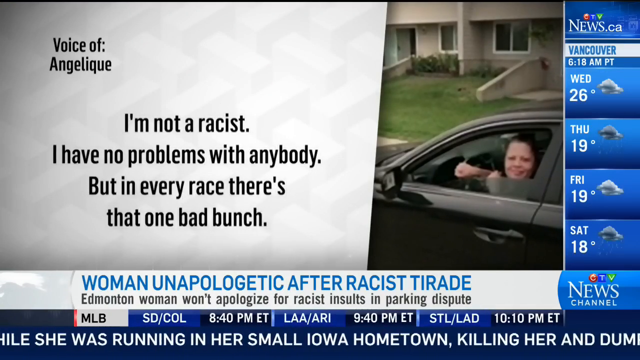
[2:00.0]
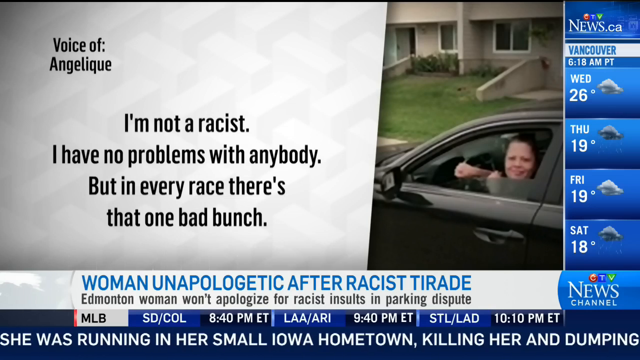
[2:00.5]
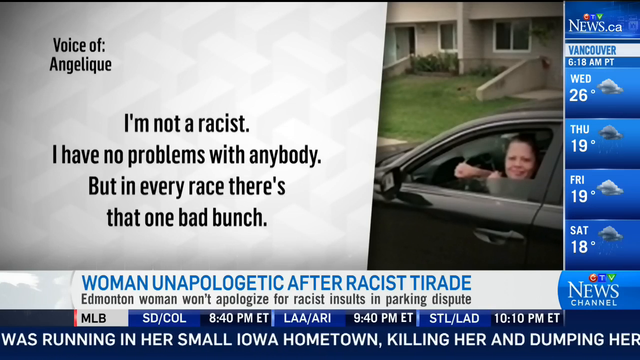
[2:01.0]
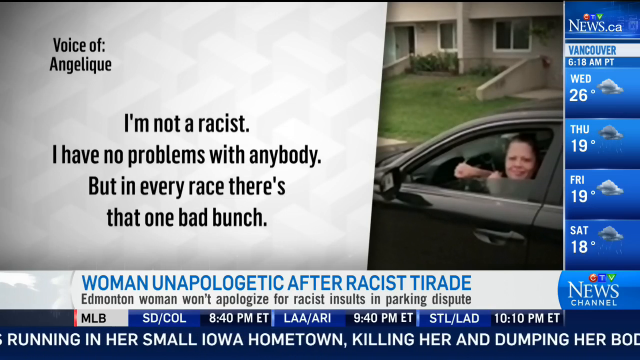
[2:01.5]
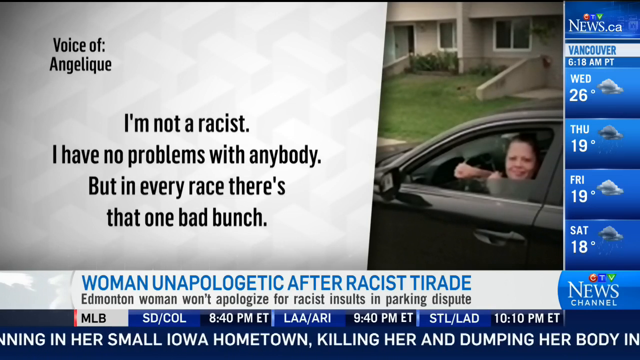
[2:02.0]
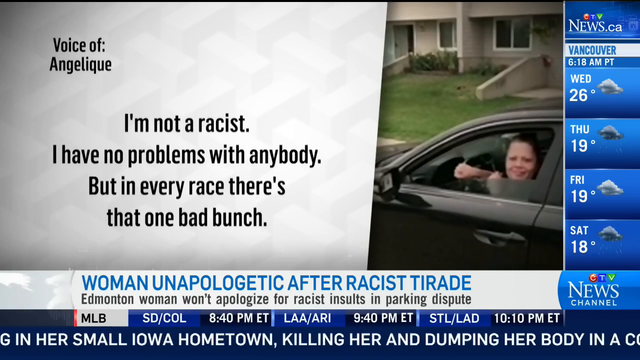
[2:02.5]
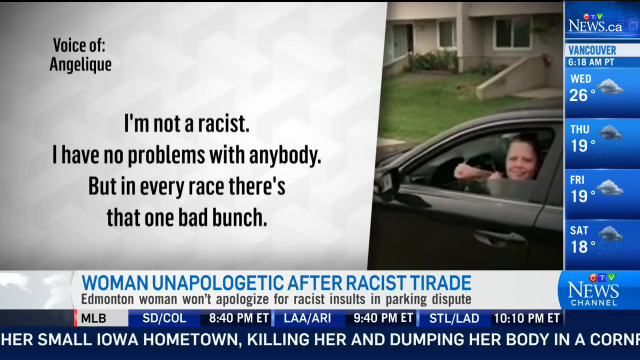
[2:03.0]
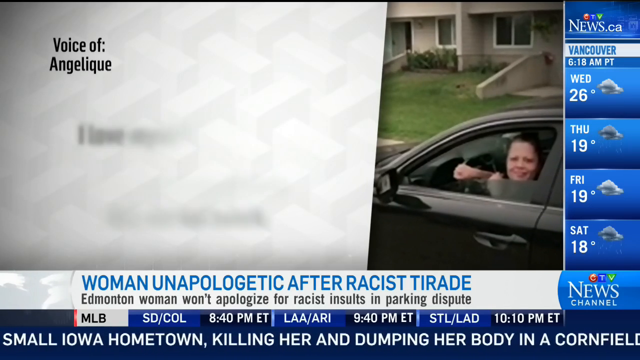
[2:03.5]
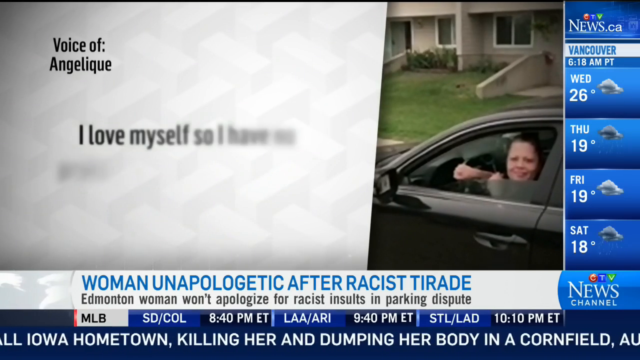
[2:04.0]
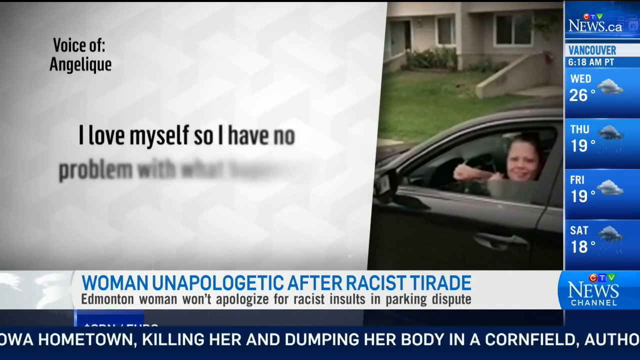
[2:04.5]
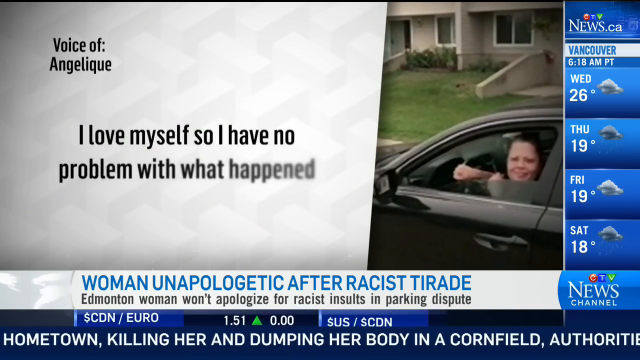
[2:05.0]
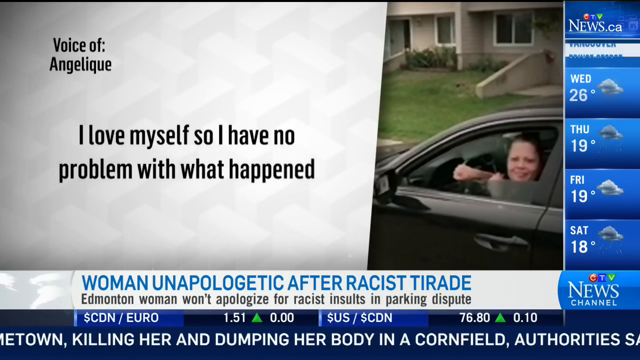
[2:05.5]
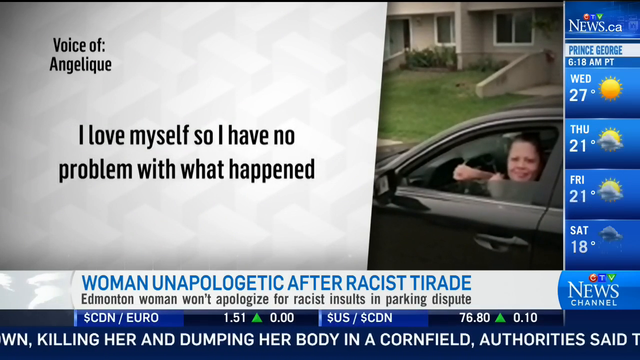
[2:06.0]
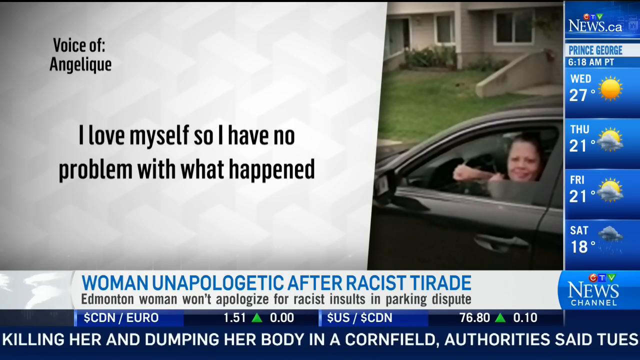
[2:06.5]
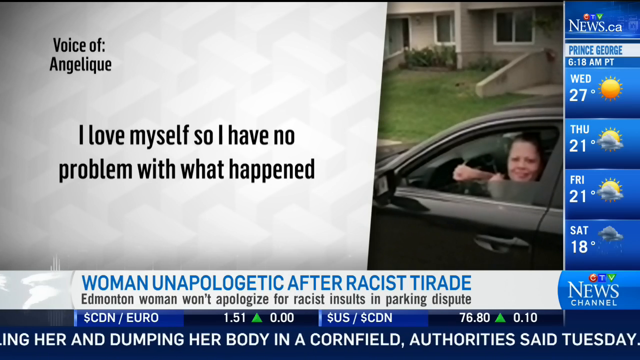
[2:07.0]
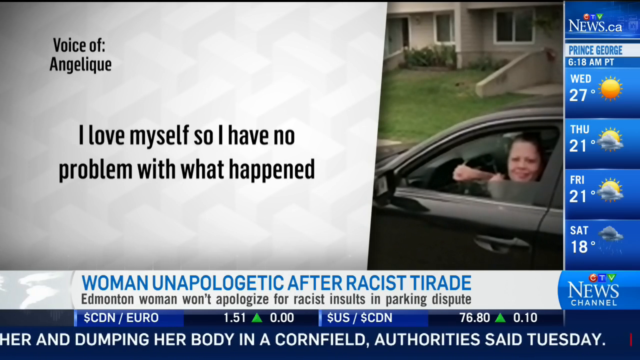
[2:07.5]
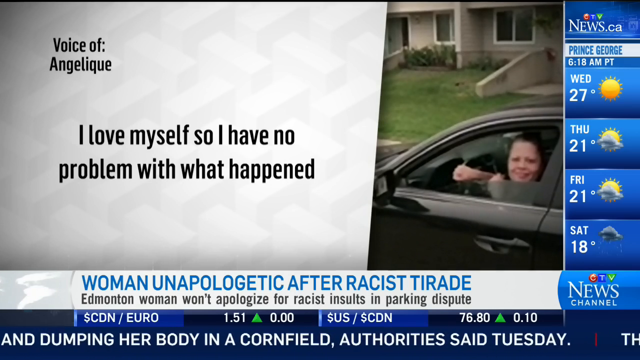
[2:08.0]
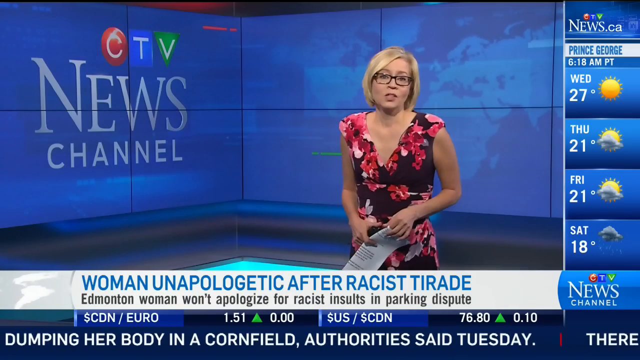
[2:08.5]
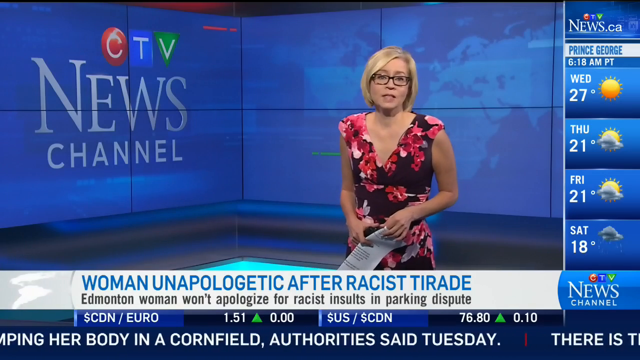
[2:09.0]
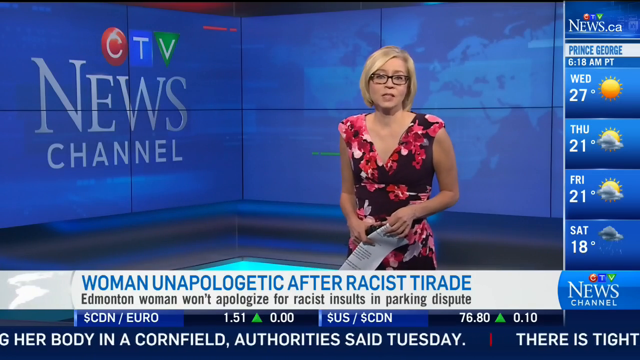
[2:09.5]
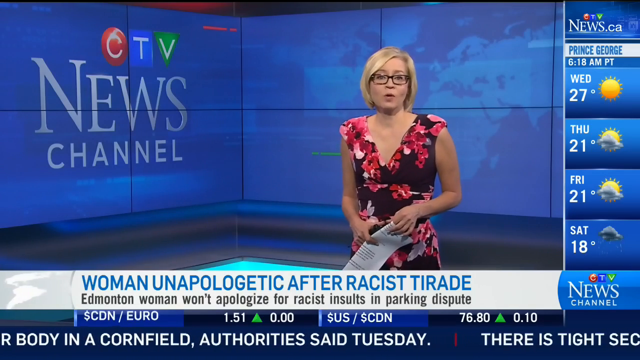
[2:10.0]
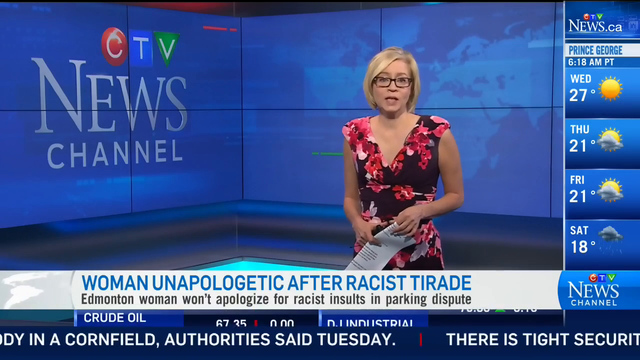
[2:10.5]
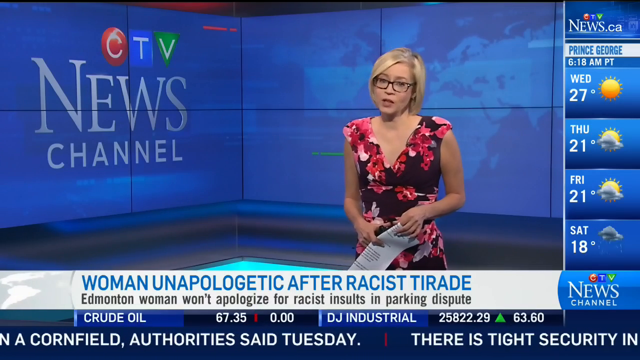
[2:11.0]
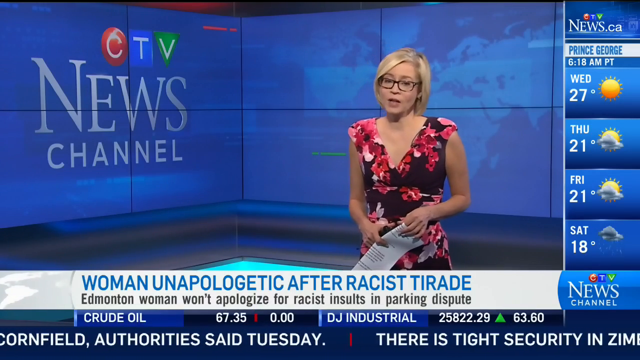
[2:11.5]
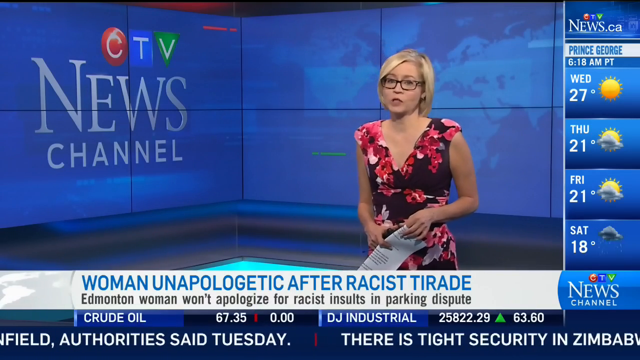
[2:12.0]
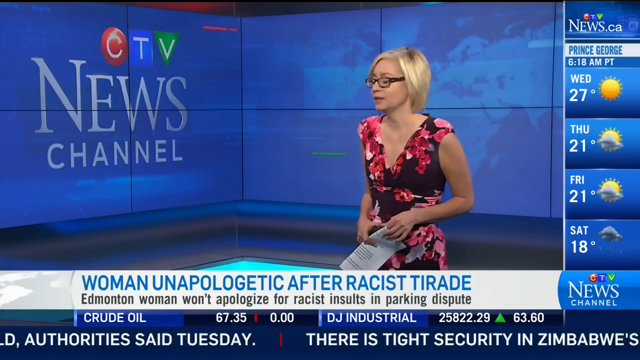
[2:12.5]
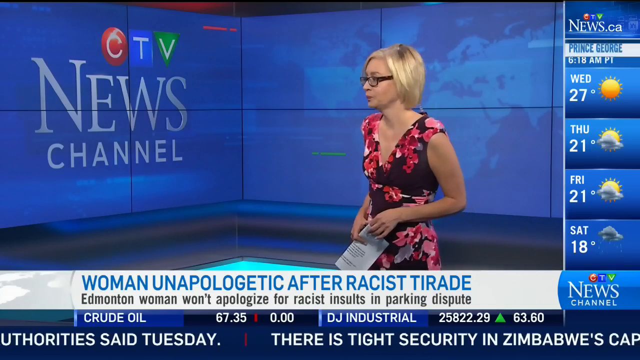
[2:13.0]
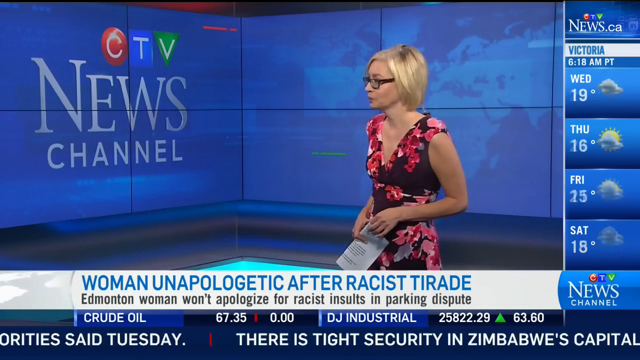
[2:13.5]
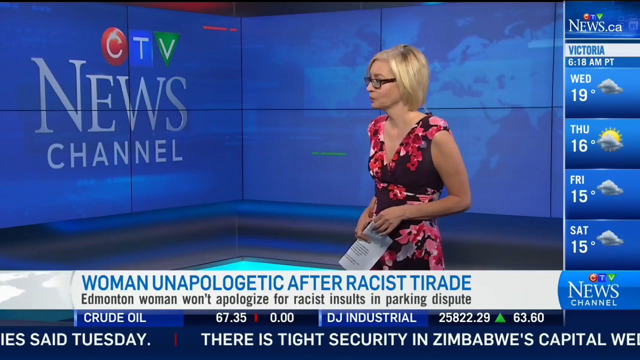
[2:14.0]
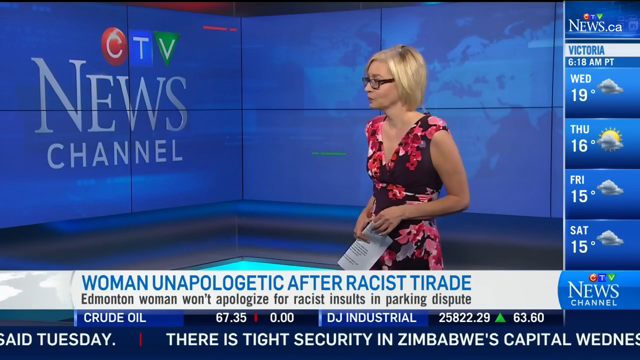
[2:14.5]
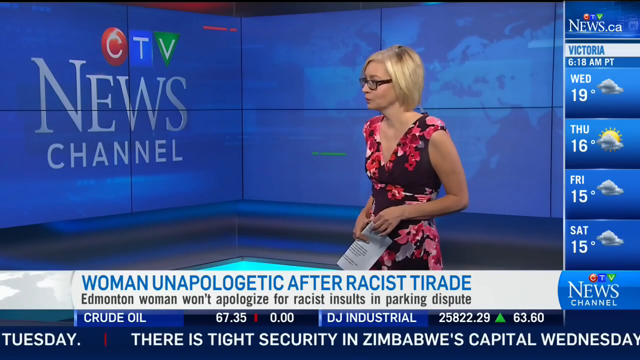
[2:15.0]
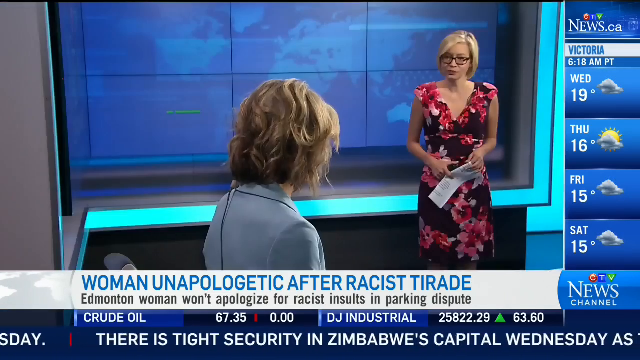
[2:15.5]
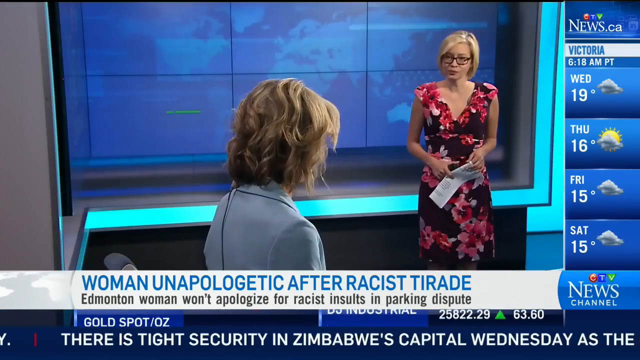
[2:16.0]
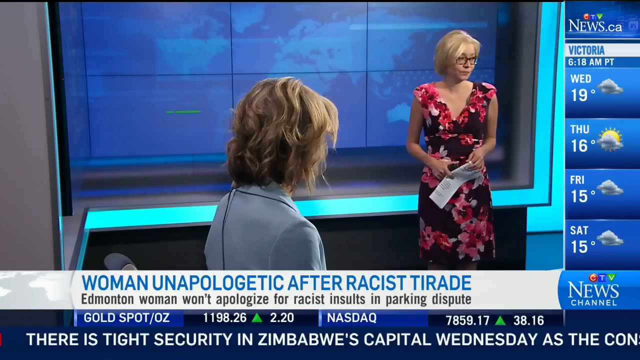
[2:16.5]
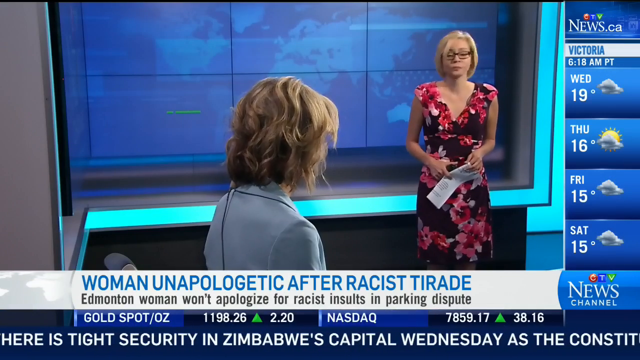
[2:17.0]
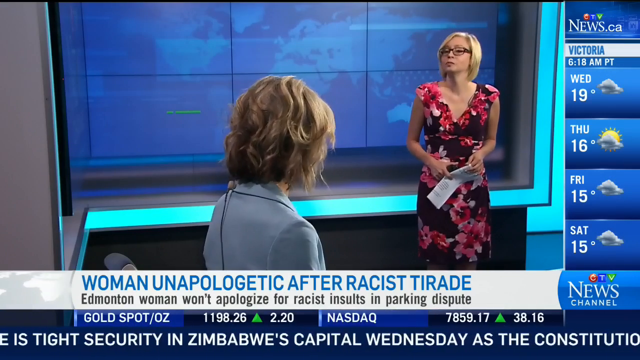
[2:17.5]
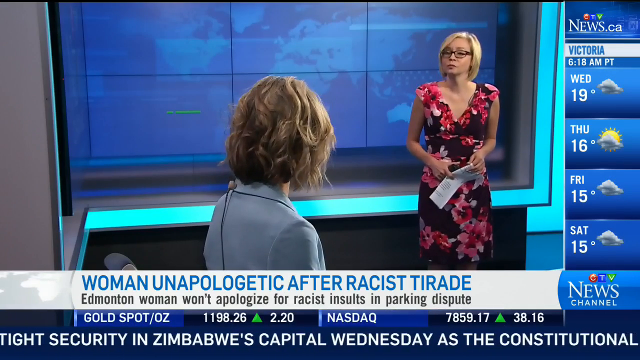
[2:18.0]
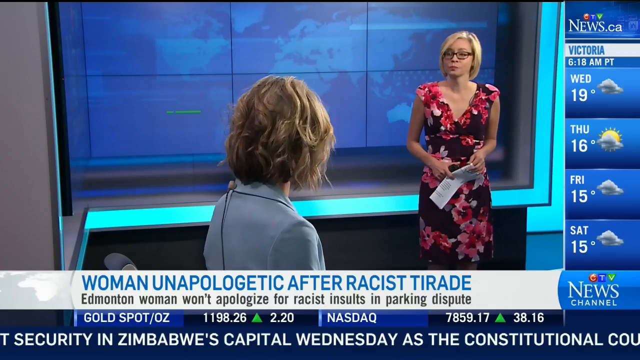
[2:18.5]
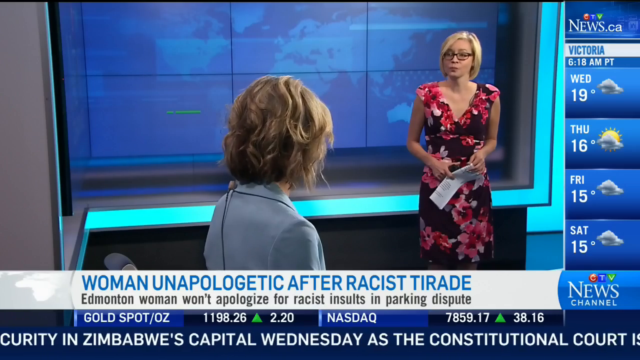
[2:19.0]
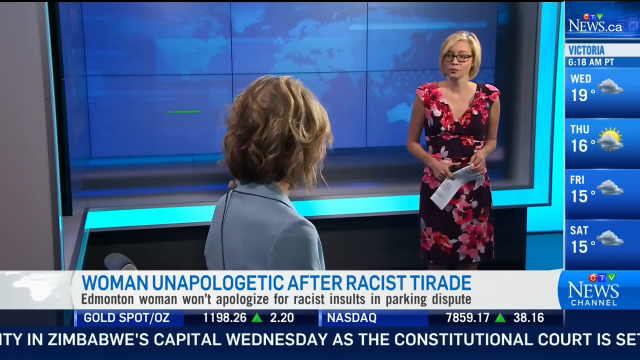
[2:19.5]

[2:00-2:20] The woman in the parking dispute is shown in her car, with the text "I'm not a racist, I have no problems with anybody, but in every race there's that one bad bunch" displayed next to her face. The text "I love myself, so I have no problem with what happened" appears, along with "voicing Angelique." The video pans back to the newsroom, where the presenter in the long flower-design dress is still holding the document and talking, and the title still reads "Woman unapologetic after racist tirade." The camera pans around to the back of the other reporter, who is sitting down; her face is not visible, but the back of her head moves while the standing presenter is shown. The video then returns to the disgruntled woman's statement, repeating it with her face shown next to the text.